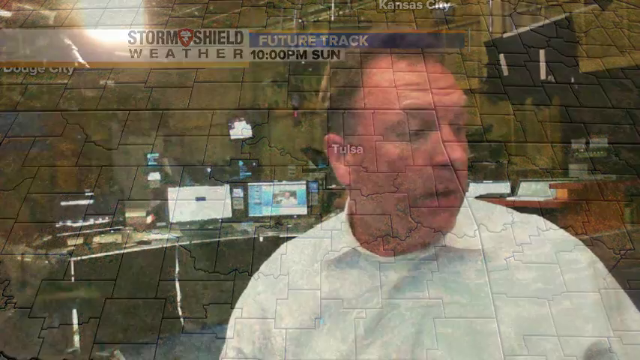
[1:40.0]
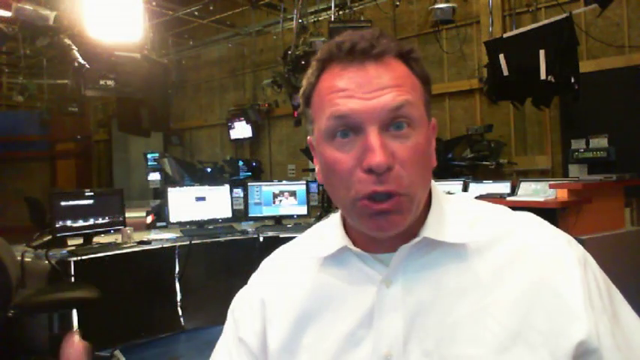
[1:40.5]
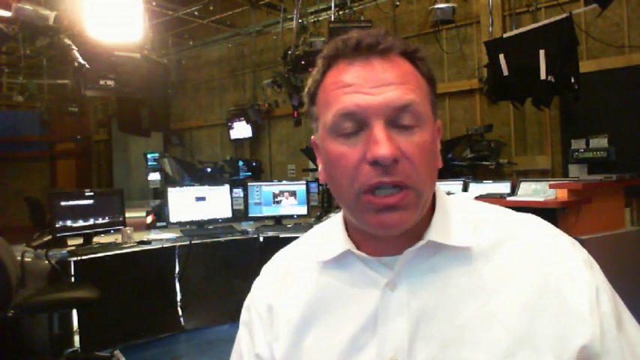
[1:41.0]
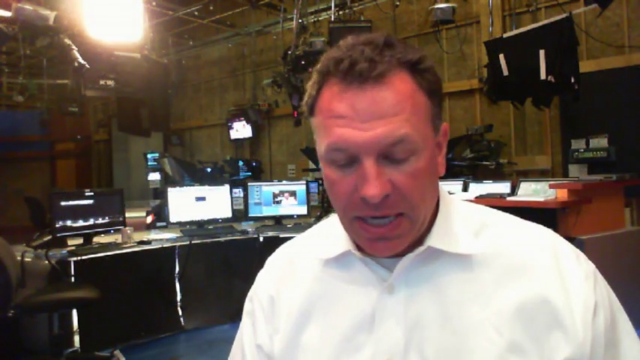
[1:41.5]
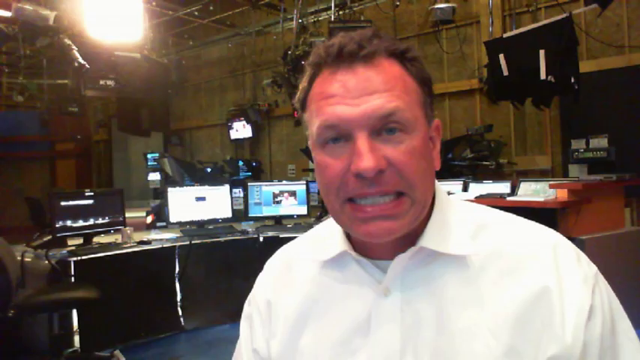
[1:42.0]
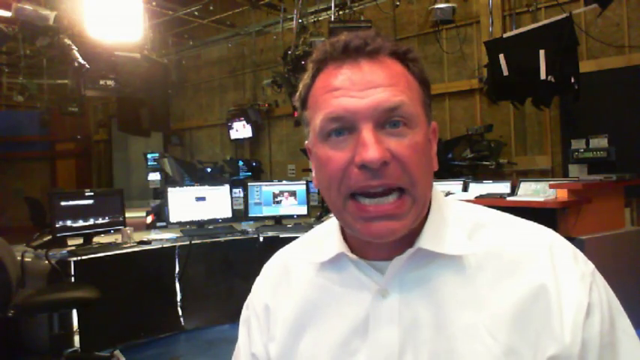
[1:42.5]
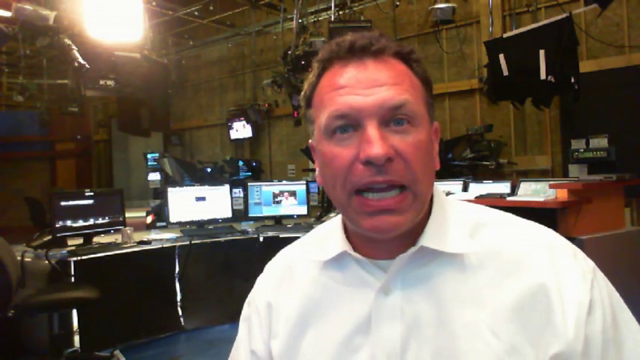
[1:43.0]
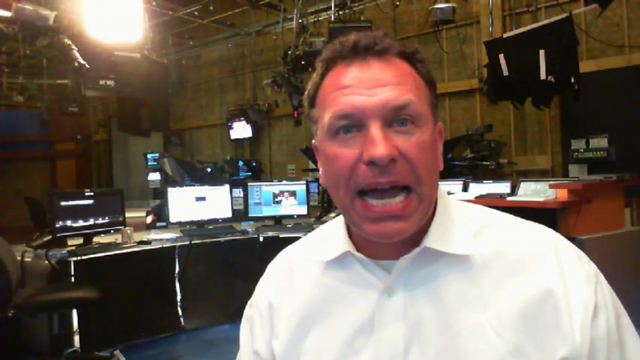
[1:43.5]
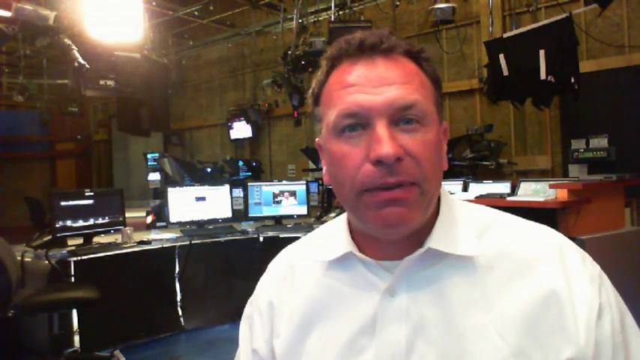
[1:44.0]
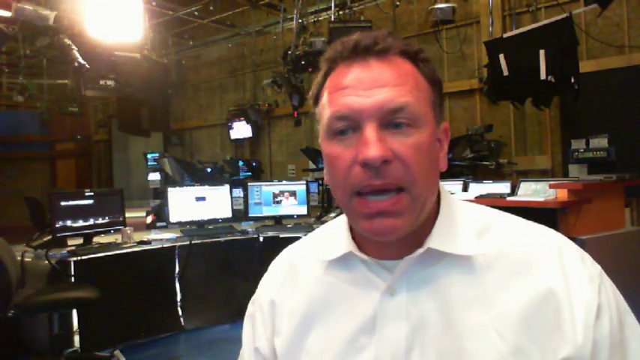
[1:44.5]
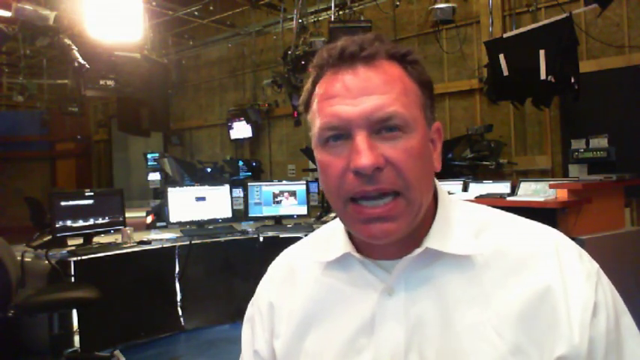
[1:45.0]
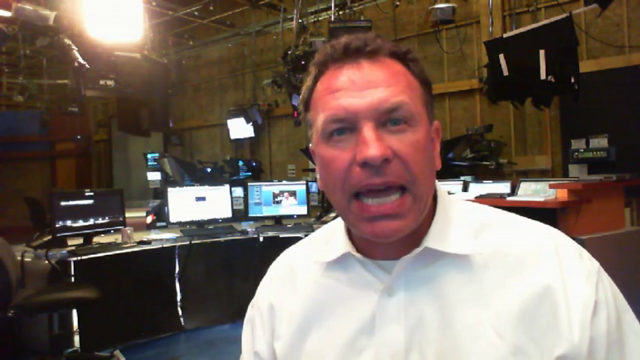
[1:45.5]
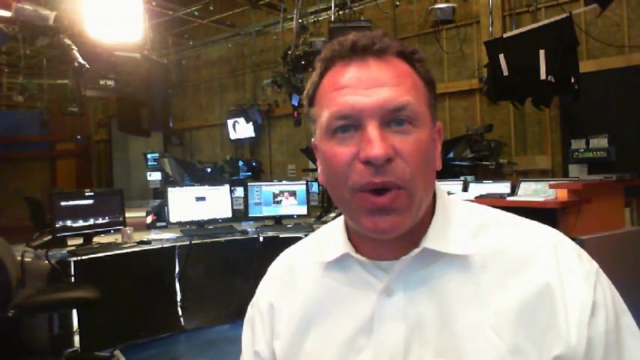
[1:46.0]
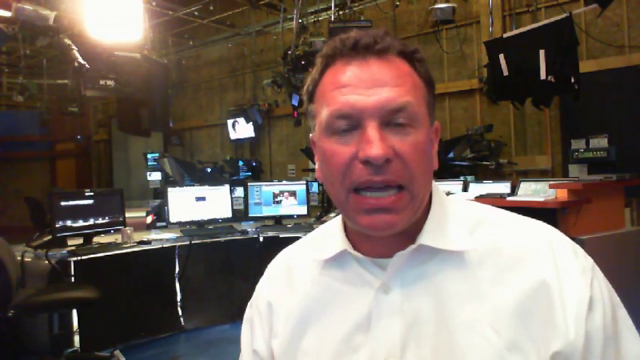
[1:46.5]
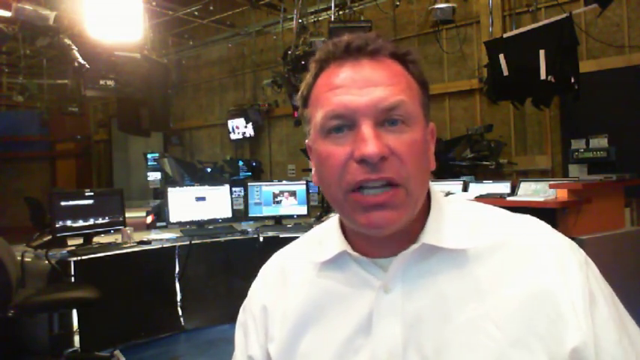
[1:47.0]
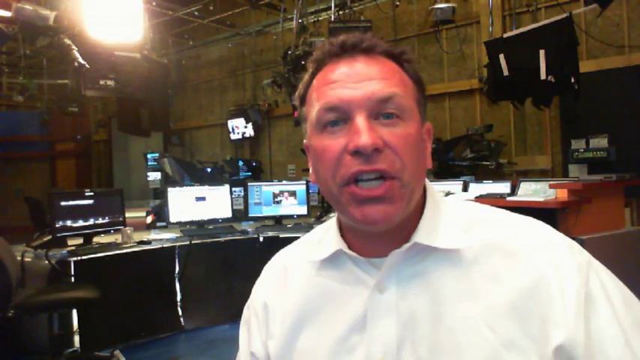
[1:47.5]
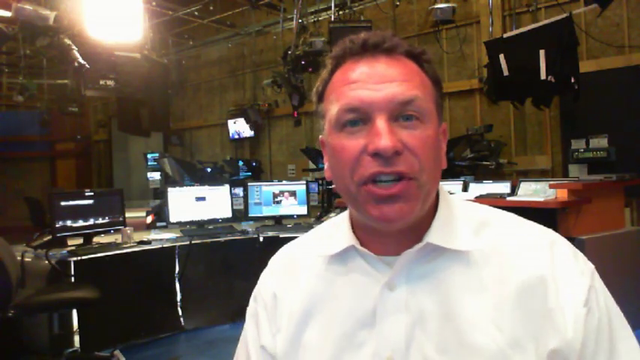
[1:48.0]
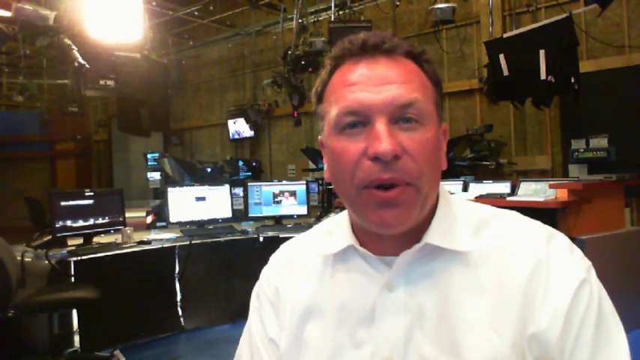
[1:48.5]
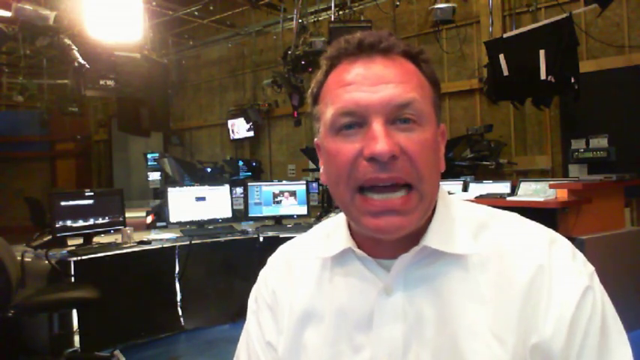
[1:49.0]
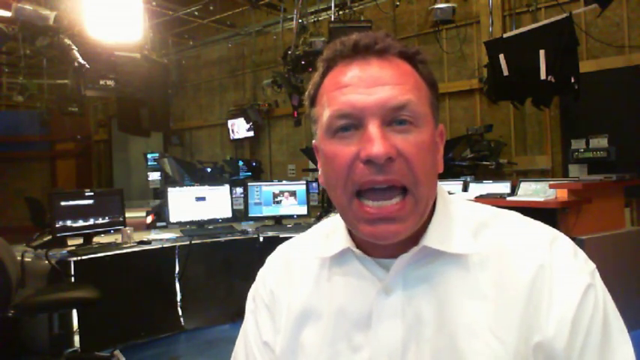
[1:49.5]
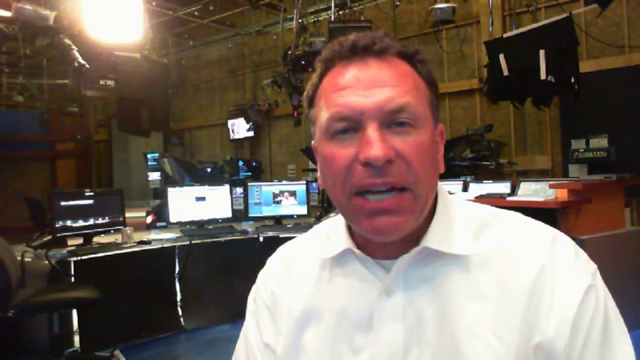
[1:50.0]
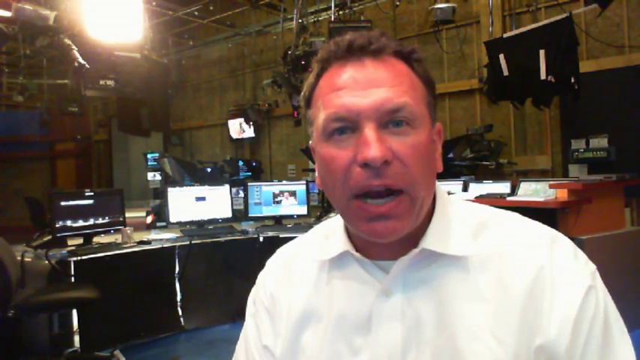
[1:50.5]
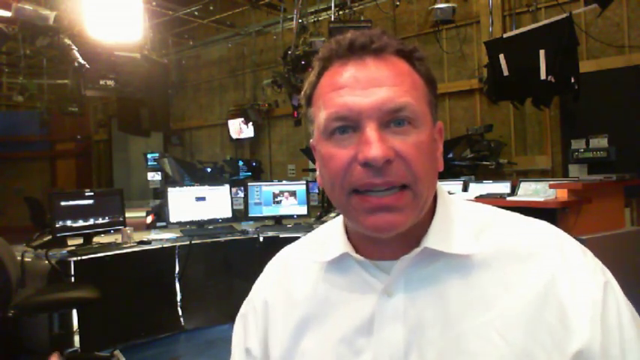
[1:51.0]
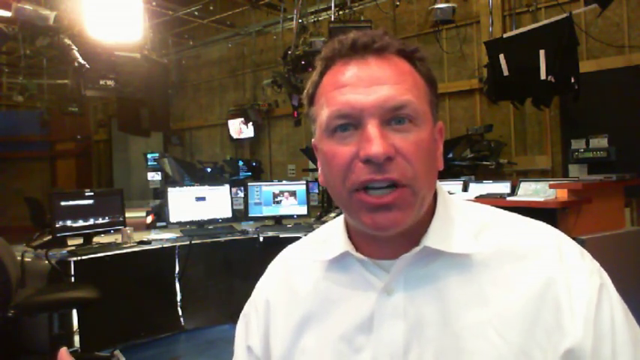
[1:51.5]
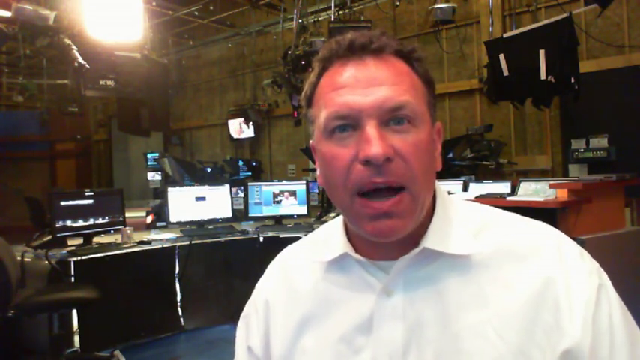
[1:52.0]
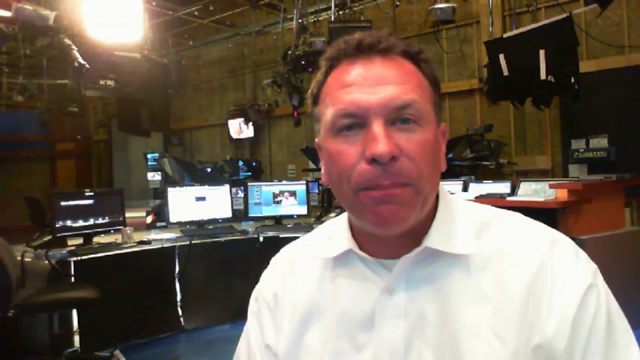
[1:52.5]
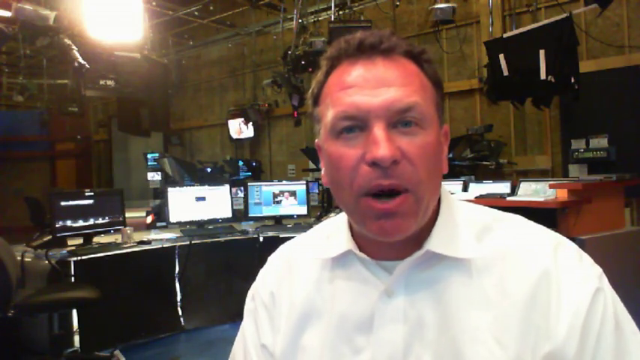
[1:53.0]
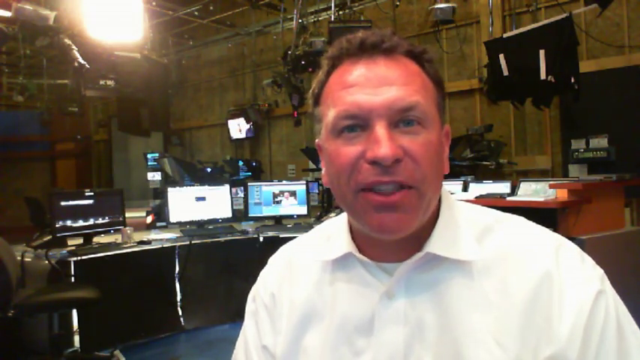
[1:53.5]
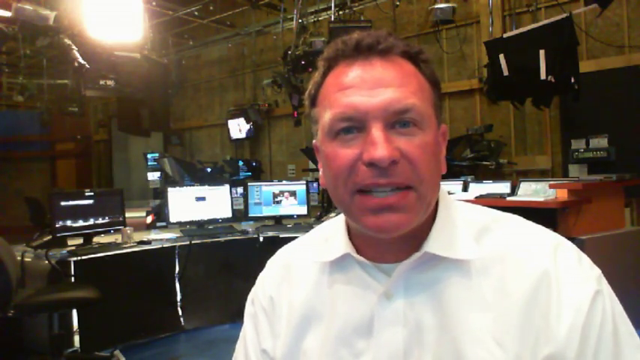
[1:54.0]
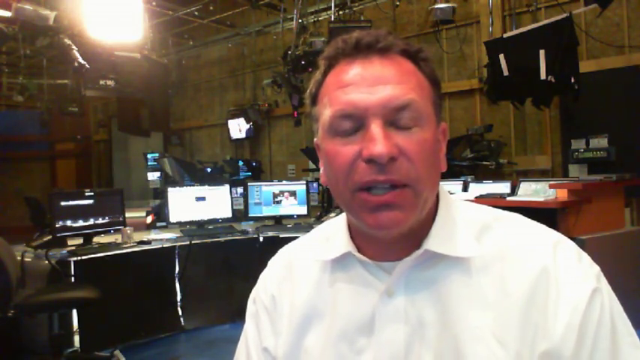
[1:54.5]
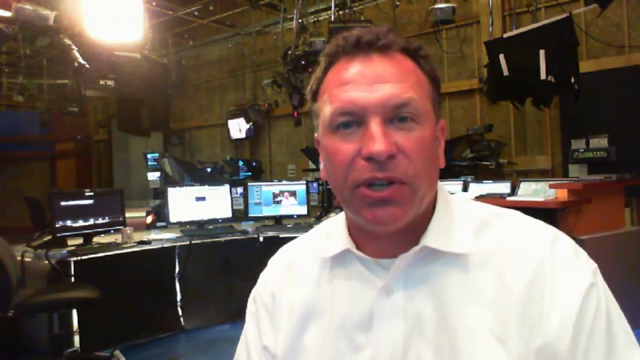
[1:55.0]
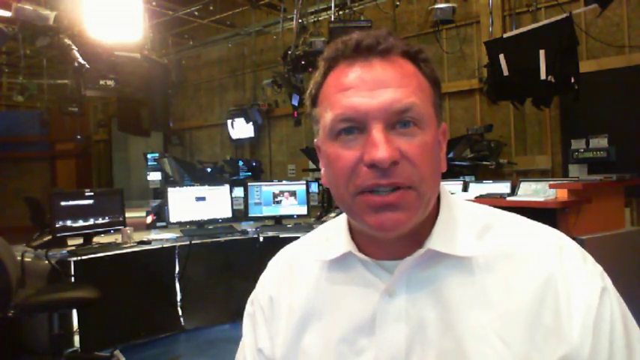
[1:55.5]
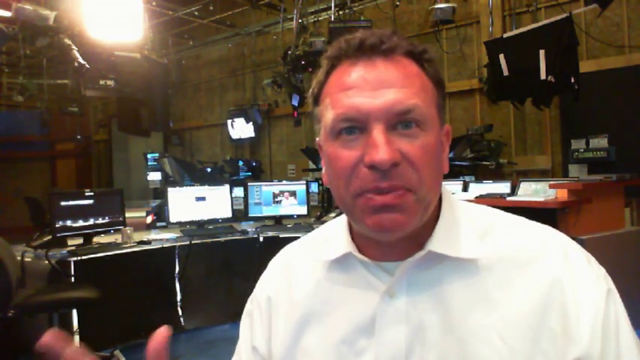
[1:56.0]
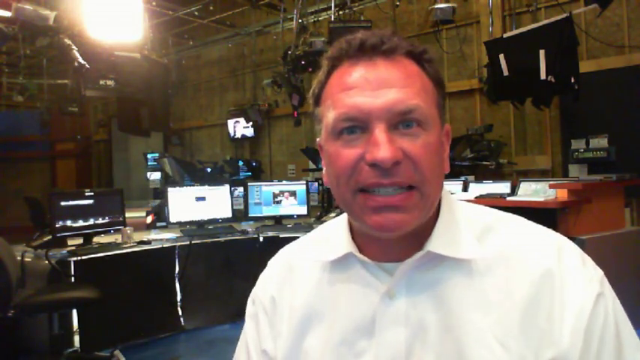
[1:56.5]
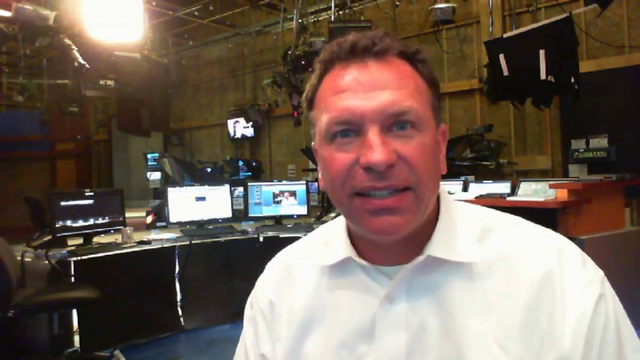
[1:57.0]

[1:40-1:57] The Storm Shield Weather banner overlay shows "future track 10 p.m. Sun", and the focus is on Tulsa on the topographical map, with other cities outlined in black and the topography indicated by various shades of green, yellow, gray and black. The man is in the broadcast area, which looks like a warehouse setting. Very big cameras and lights hang from the ceiling, and there is a very large what appears to be a window with light coming in at the top of it. Behind the man are the sides of the building, with one area that is a back door, and there is a table with a chair on the left side. The table has lots of computers set up and open. The man is talking; he looks down and then looks up. Screens on a mounted TV change while he talks, his eyes blink, and he moves his hands around.